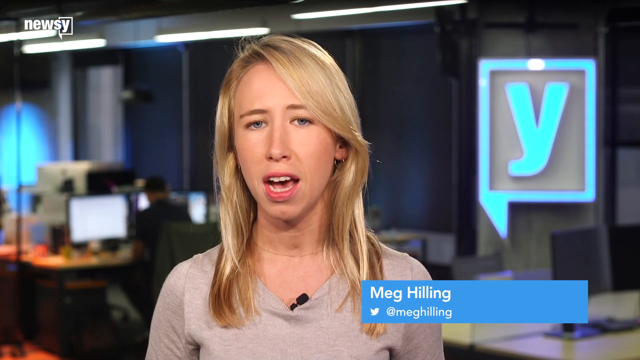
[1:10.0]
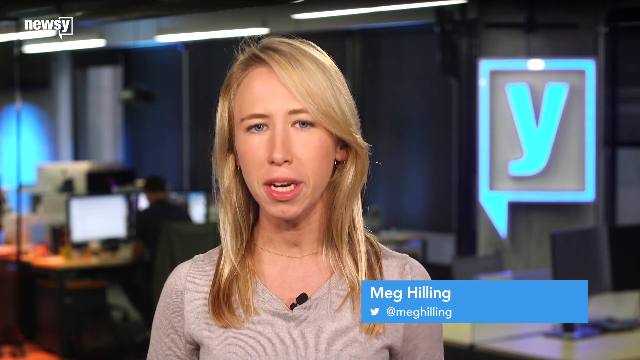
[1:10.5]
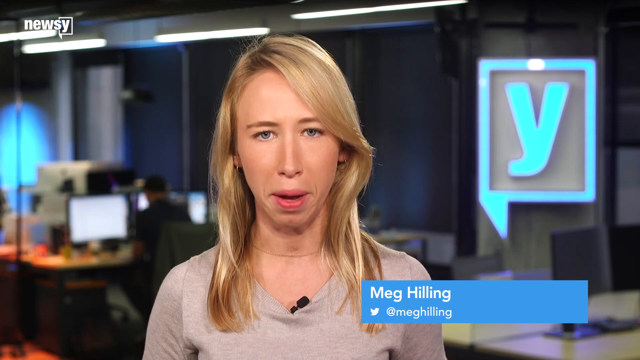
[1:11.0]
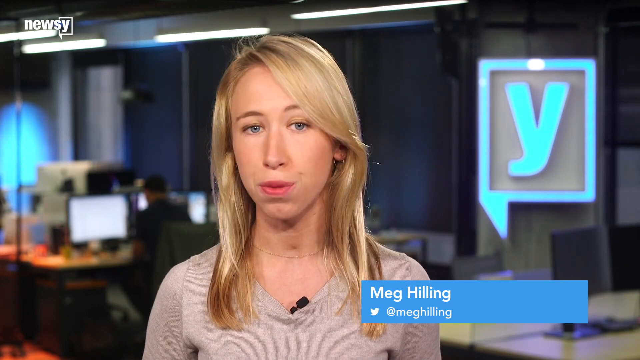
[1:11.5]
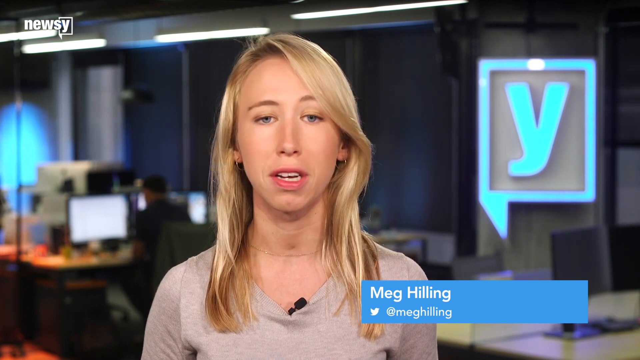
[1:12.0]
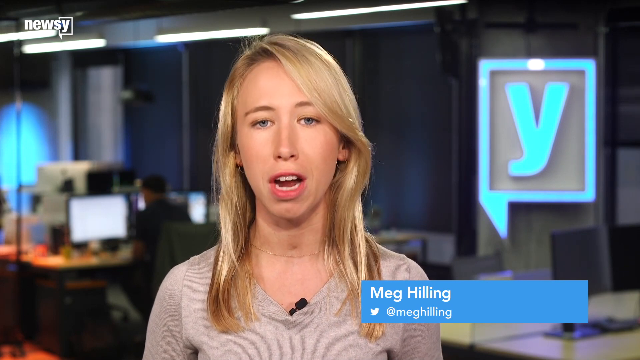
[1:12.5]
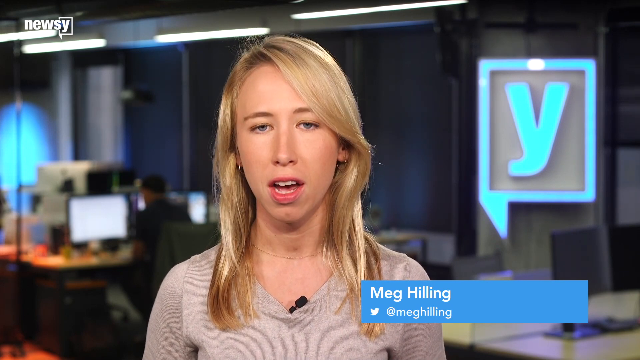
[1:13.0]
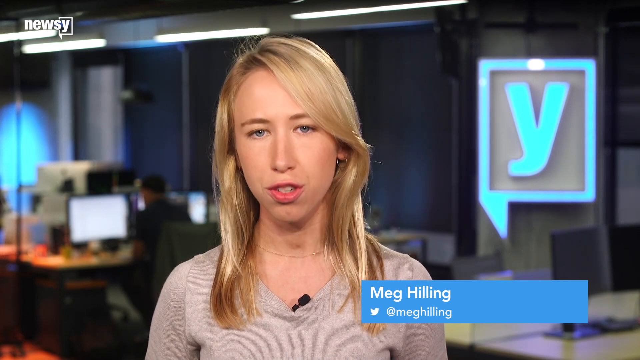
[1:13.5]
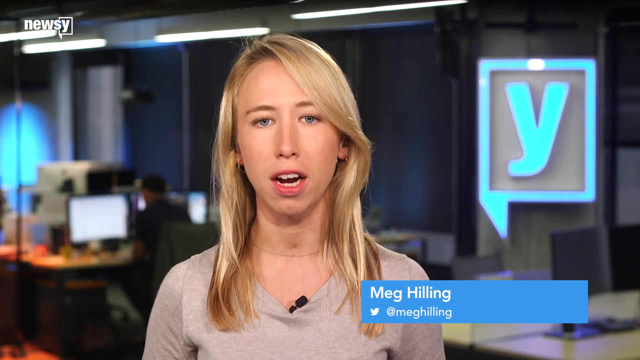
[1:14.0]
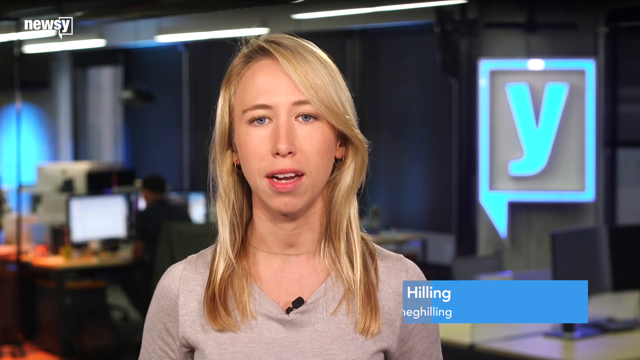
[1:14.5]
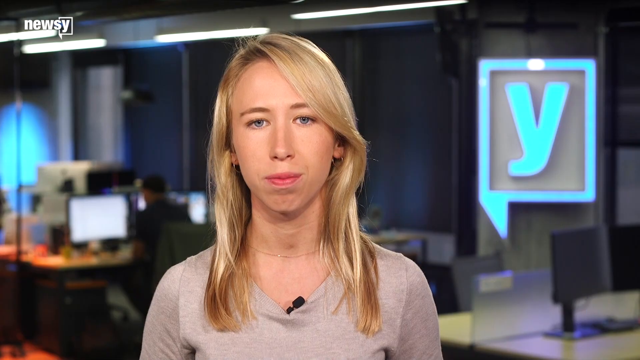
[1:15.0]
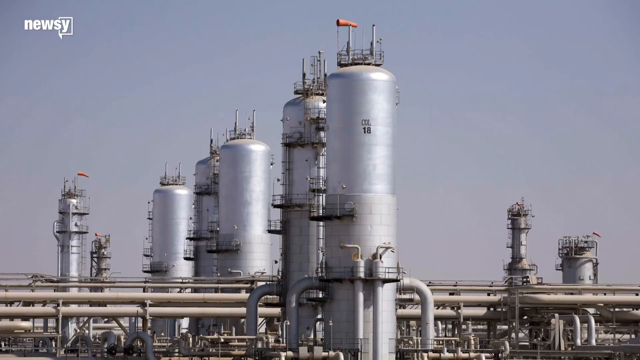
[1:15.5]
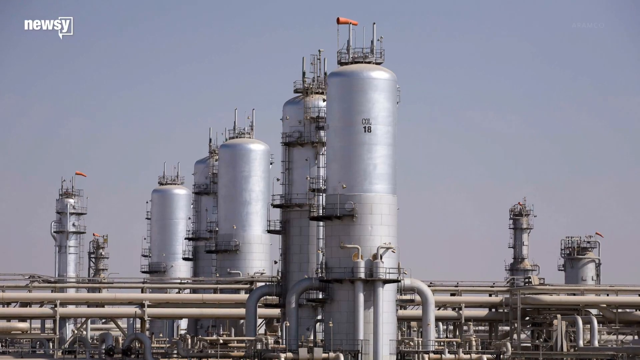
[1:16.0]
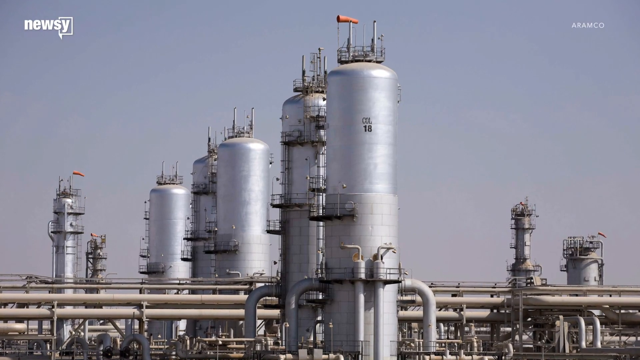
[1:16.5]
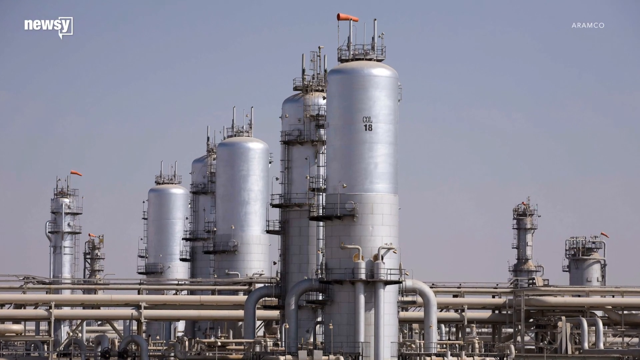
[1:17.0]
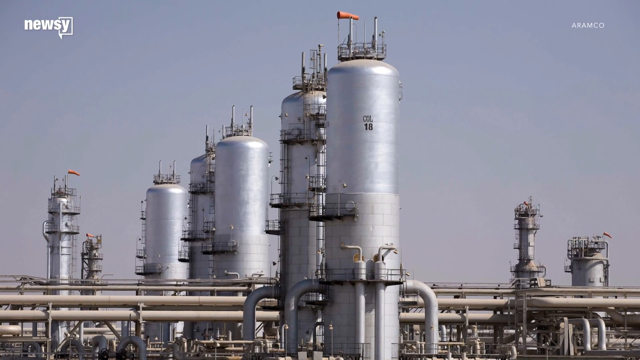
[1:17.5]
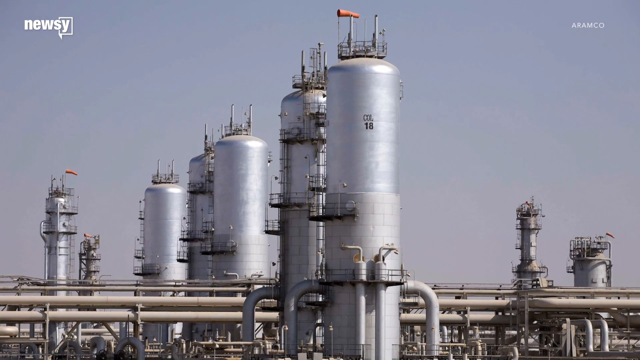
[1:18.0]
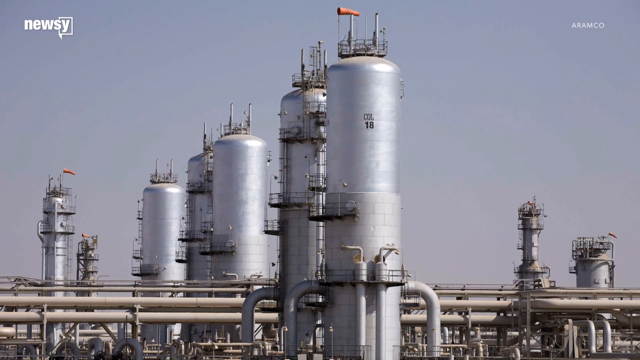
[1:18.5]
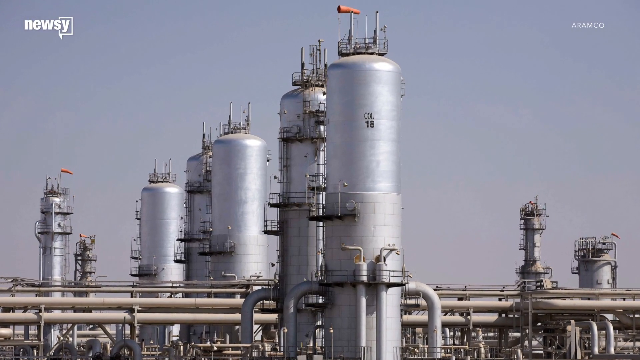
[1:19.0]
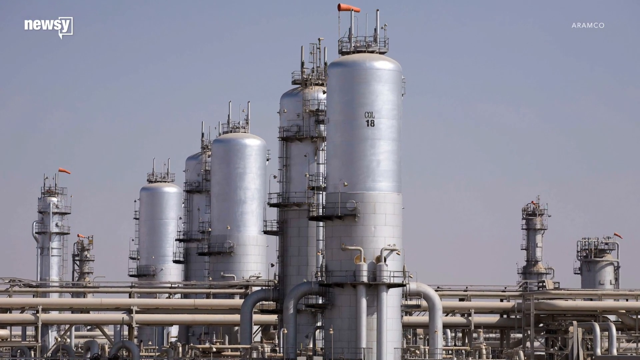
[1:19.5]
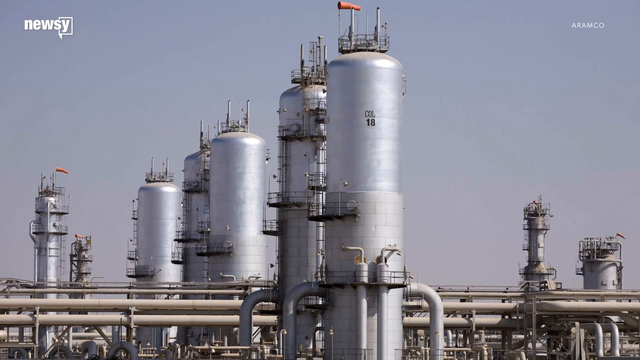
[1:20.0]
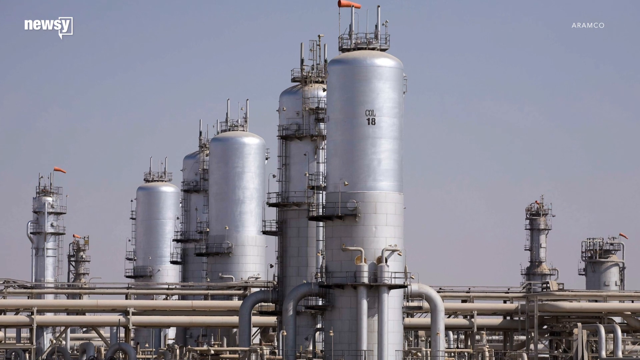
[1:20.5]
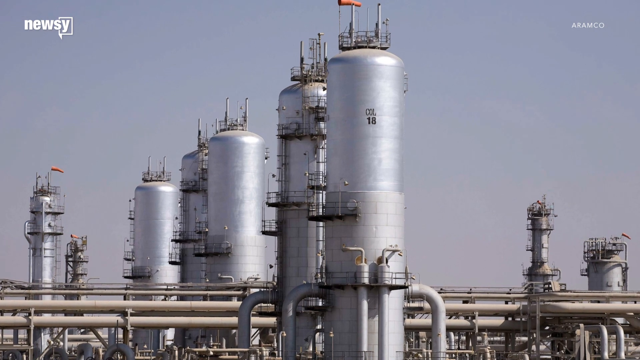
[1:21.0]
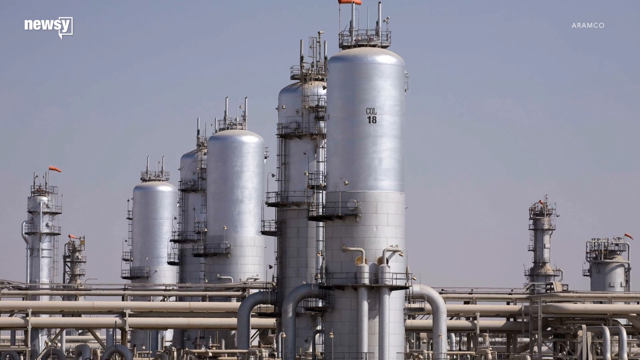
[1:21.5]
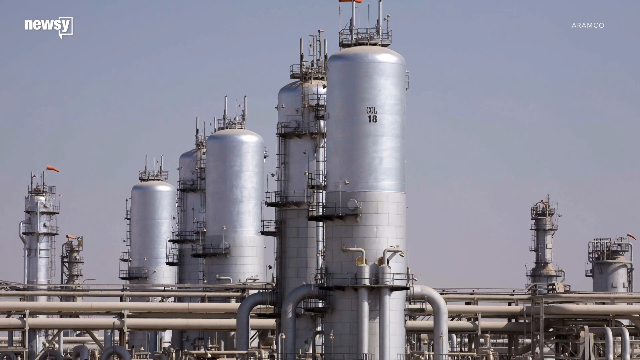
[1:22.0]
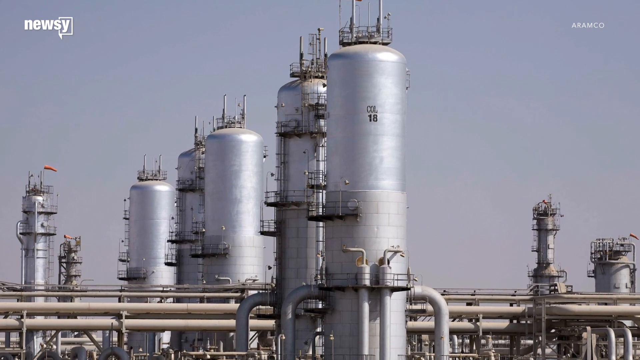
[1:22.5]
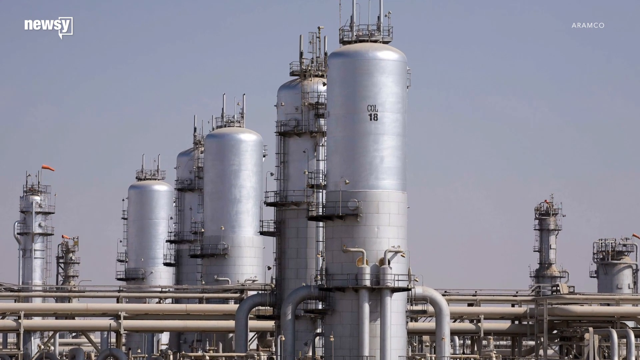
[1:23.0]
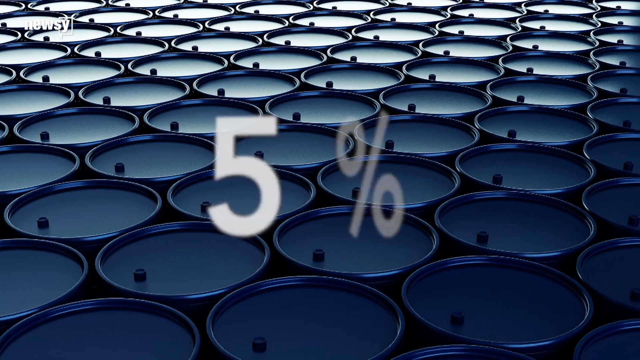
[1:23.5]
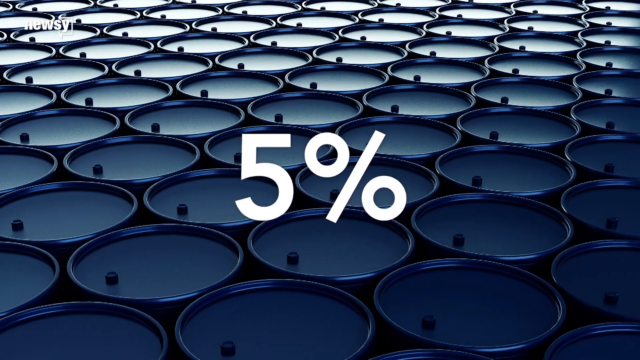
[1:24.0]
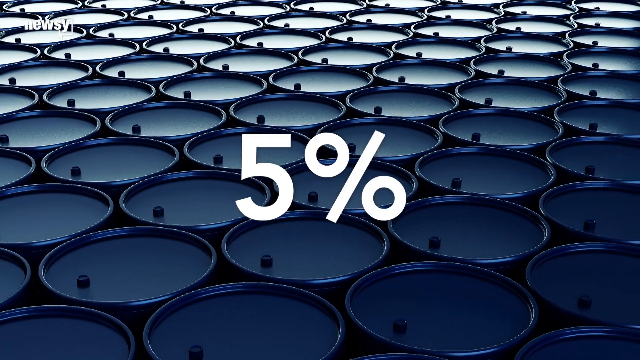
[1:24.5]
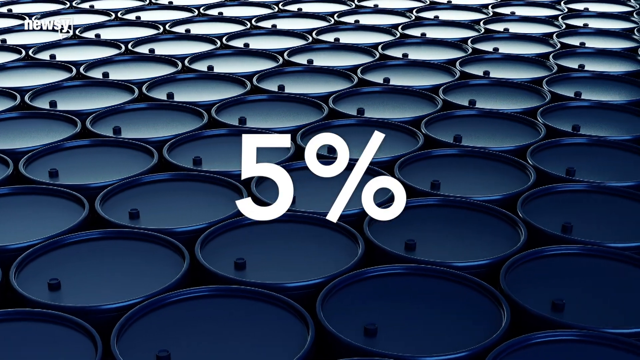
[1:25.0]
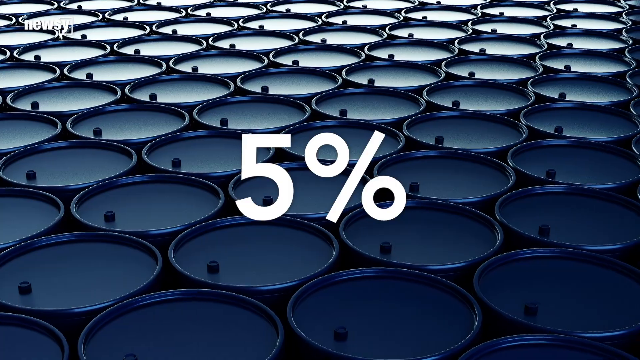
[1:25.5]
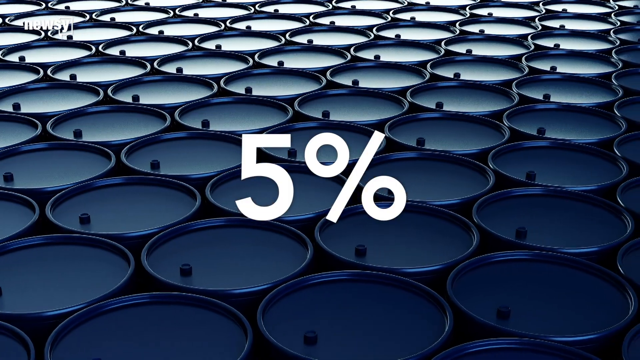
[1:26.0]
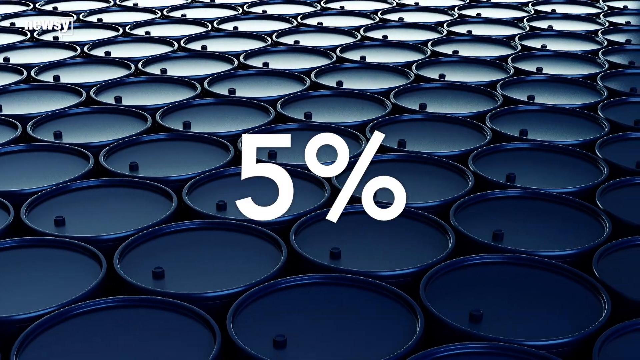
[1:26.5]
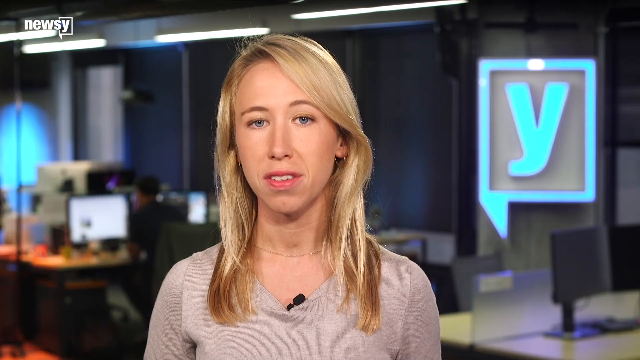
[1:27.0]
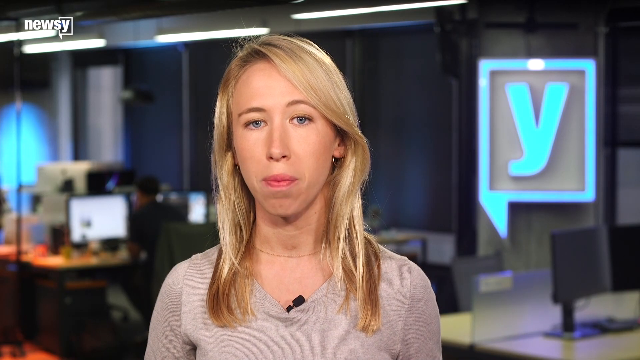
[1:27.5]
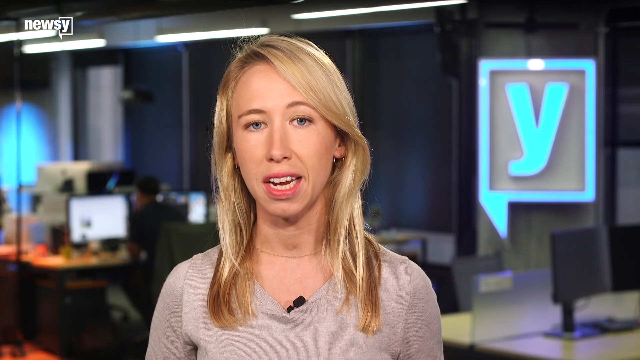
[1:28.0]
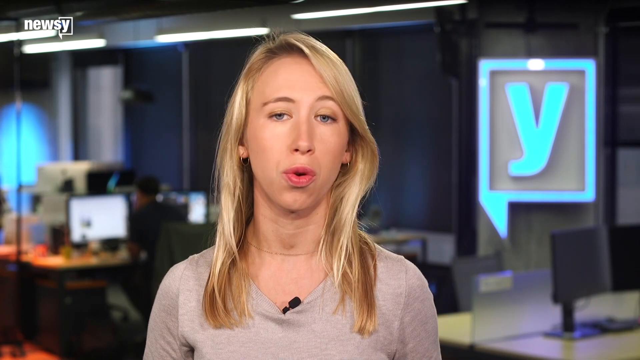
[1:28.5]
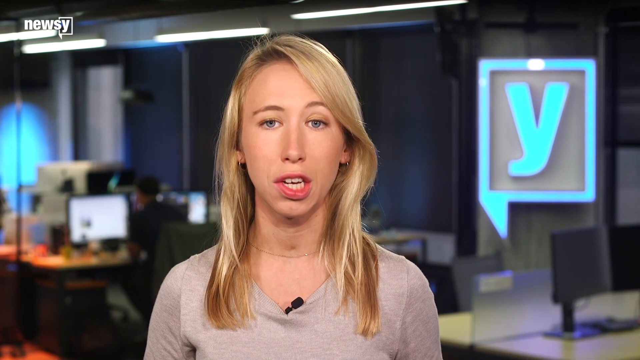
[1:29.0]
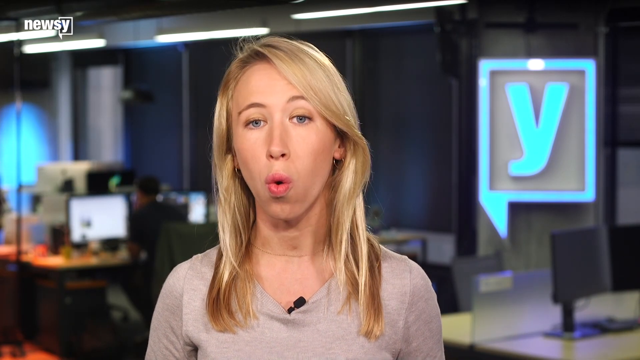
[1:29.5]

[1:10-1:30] The newscaster, Meg Killing, speaks as a blue box with white text in the bottom right-hand corner shows her name, Meg Killing, and her Twitter, at Meg Killing. Behind her, just the Y part of the Newsy logo is illuminated in light blue, and on the other side people work in the newsroom. She animatedly gives the report. The video cuts to what looks like another type of power plant or oil refinement plant, with several large cylindrical structures. Next, the screen shows barrels, apparently of oil, overlaid with white text reading "5%". The video returns to the newscaster, who talks a little more.